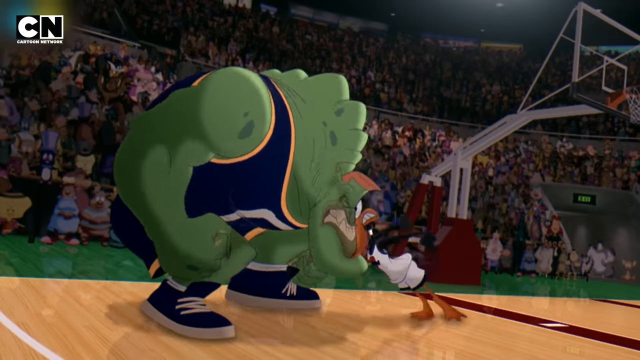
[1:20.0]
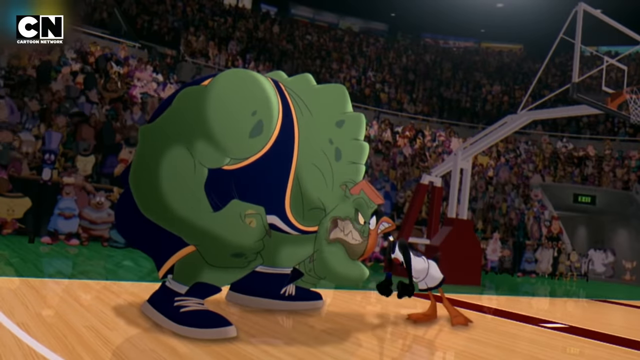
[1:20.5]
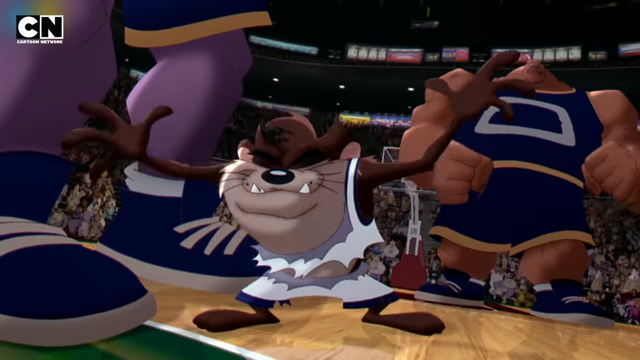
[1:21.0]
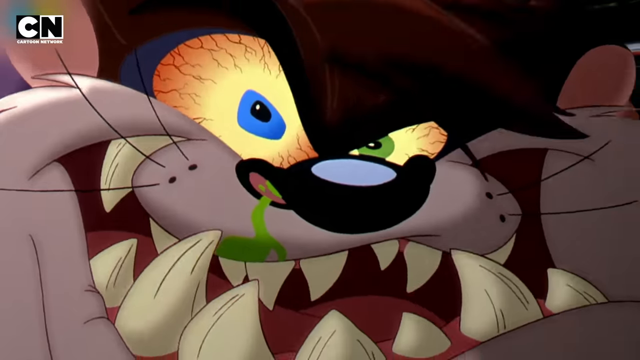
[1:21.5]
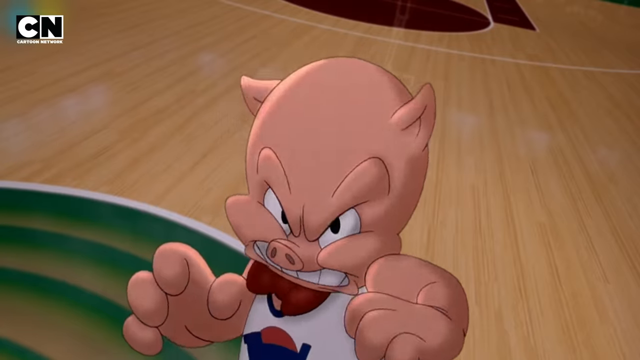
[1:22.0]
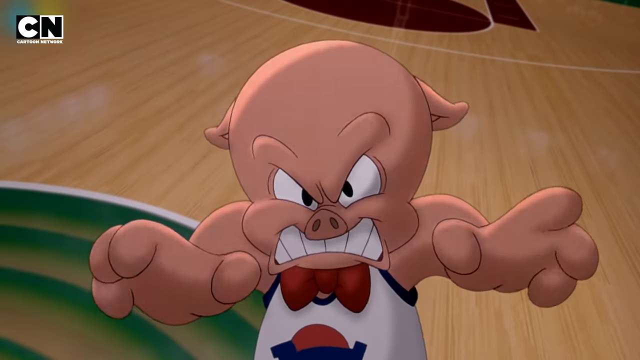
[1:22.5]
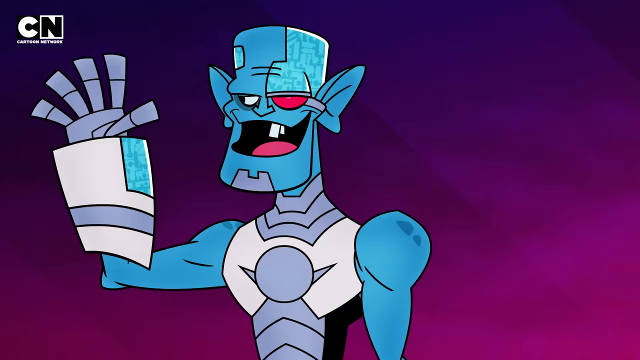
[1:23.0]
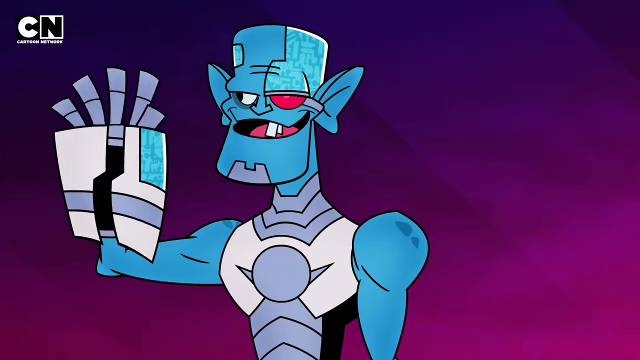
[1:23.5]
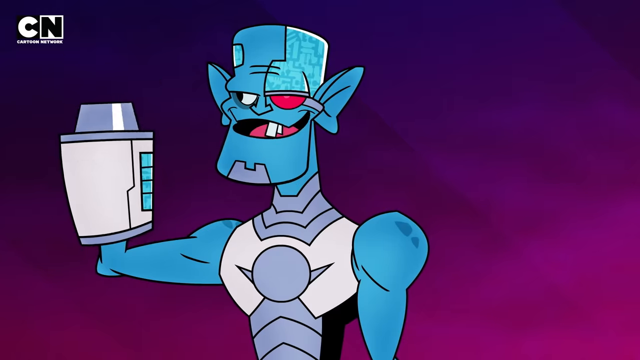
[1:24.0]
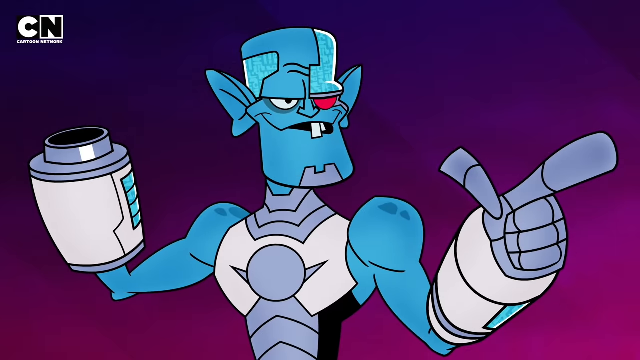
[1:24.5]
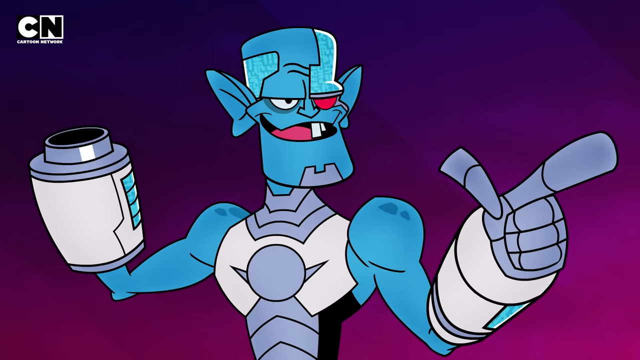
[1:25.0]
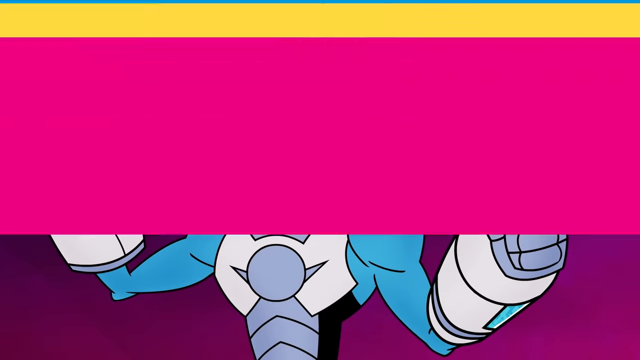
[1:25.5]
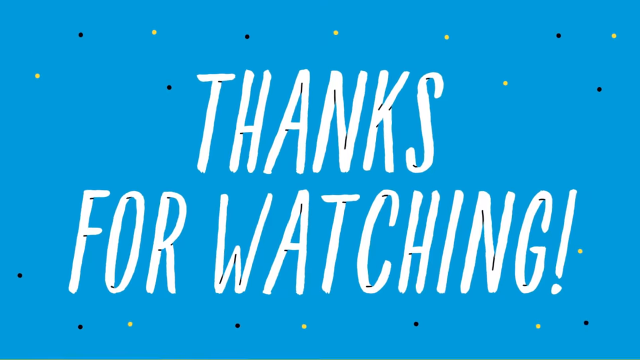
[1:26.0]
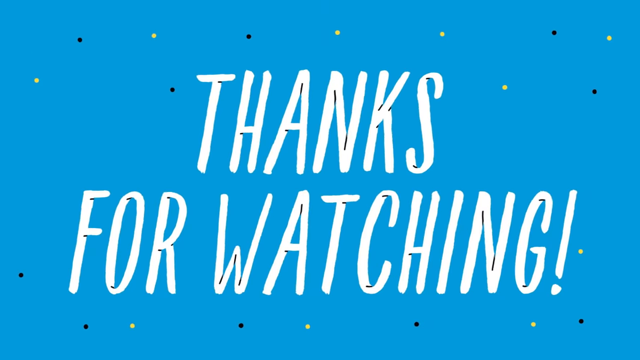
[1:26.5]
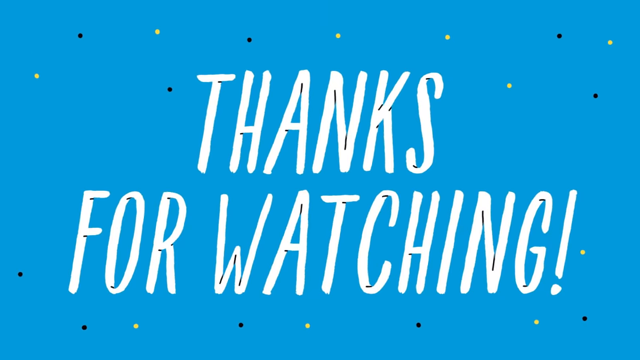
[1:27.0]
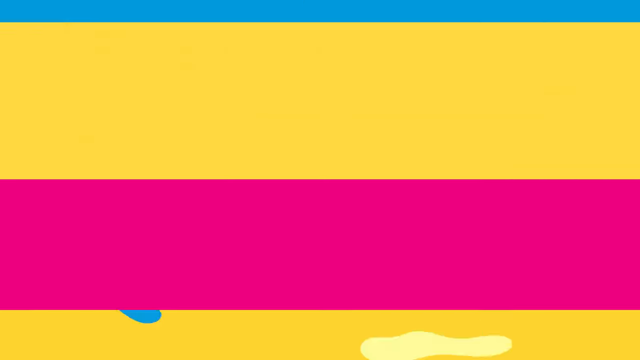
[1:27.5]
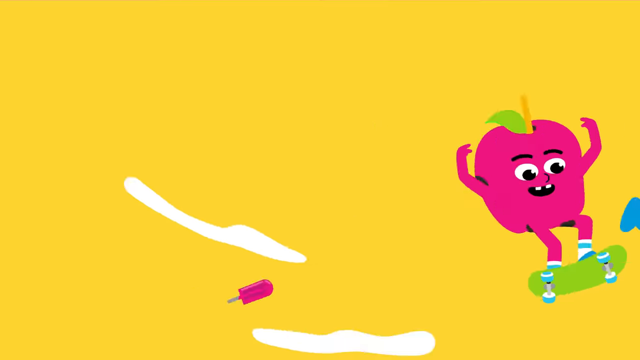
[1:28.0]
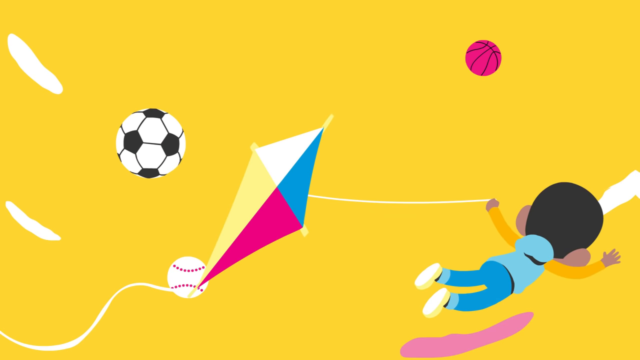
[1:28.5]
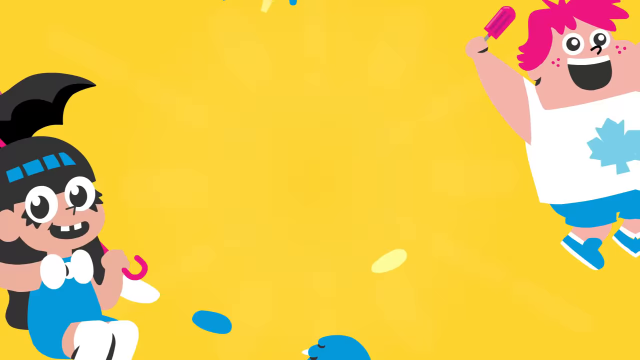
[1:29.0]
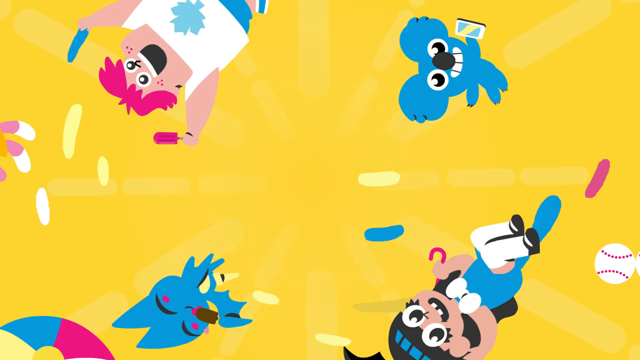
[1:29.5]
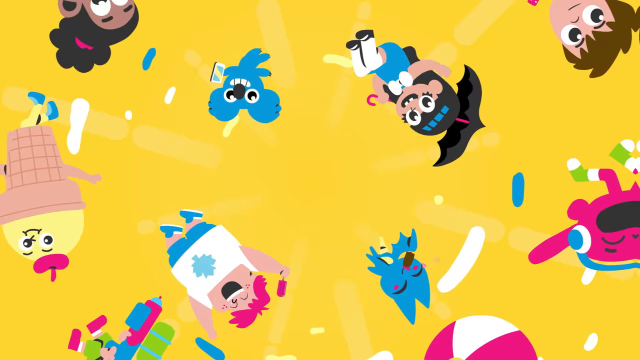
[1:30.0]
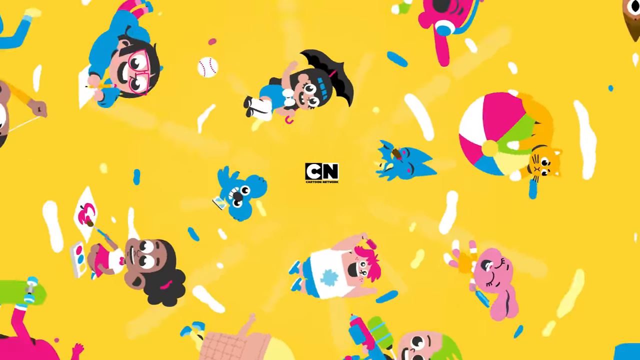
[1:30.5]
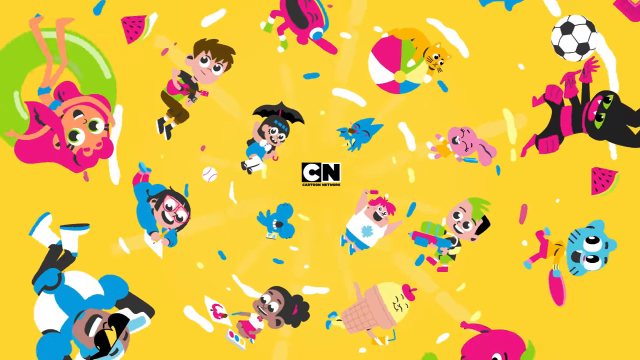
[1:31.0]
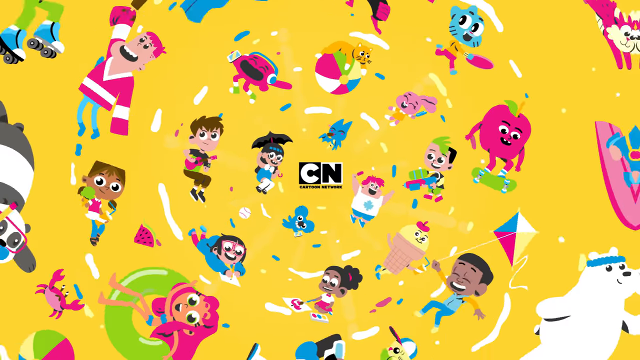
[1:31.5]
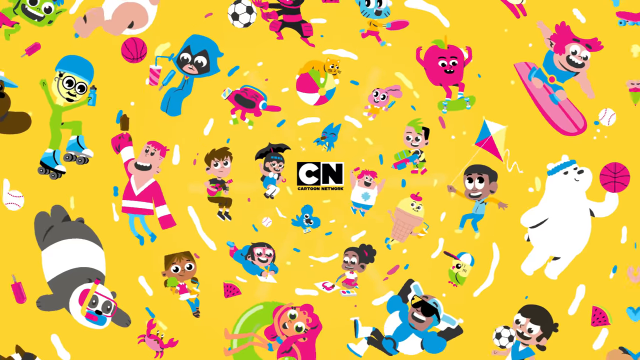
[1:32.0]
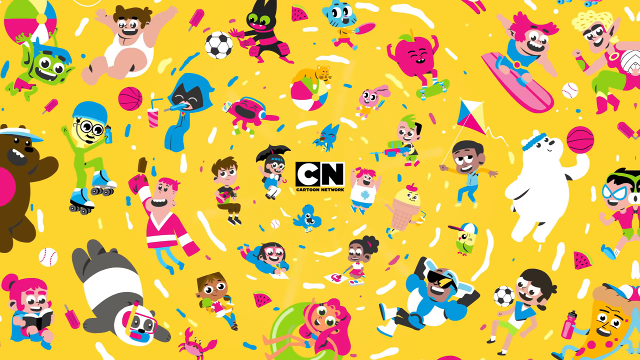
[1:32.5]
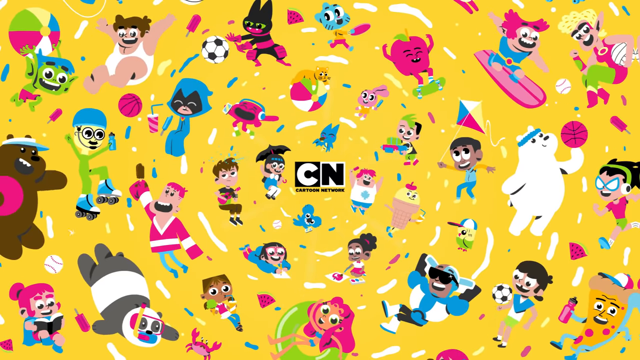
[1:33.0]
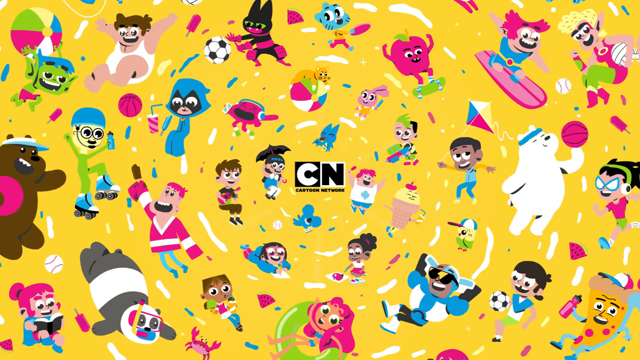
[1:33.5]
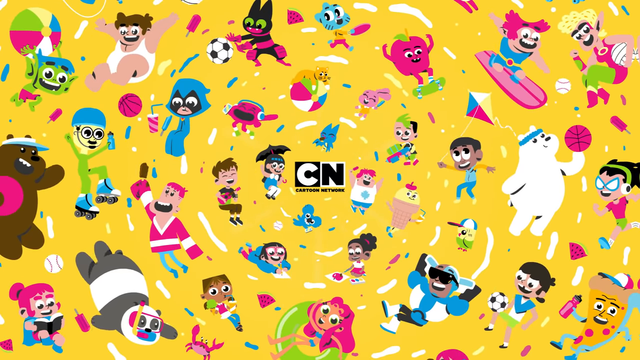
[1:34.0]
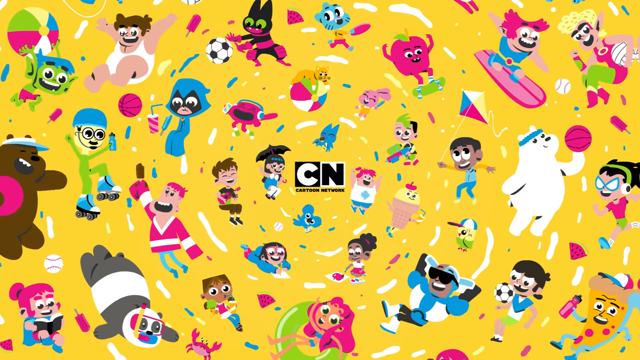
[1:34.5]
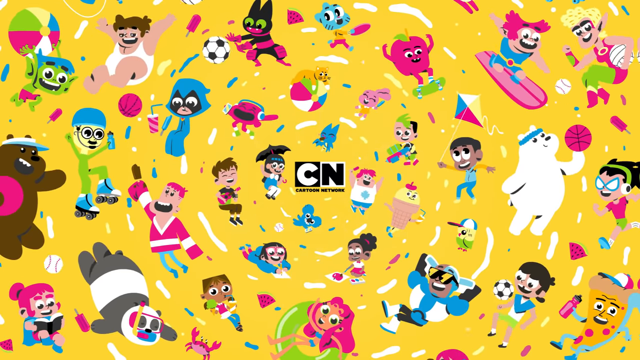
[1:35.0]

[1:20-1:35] The cartoon shows scenes from what looks like the movie Space Jam, with a basketball game between traditional Warner Bros. animated characters and large ogre-like characters. On the court, Daffy Duck grimaces toward one of these characters and butts his head up against his. The Tasmanian Devil reaches out to push two of the larger players, and Porky Pig looks angry and scowls at the camera. The scene switches back to a robotic-looking character who is blue, with metal hands and arms and one red eye; he speaks and then points in the direction of the camera. The images disappear against a blue background, and text appears that says "Thanks for watching". The Cartoon Network logo then appears in the center of the screen, surrounded by swirling images of dozens of animated characters in concentric circles that appear to orbit the logo, all against a bright yellow background.